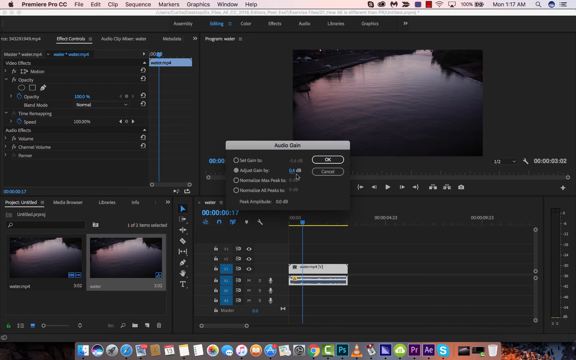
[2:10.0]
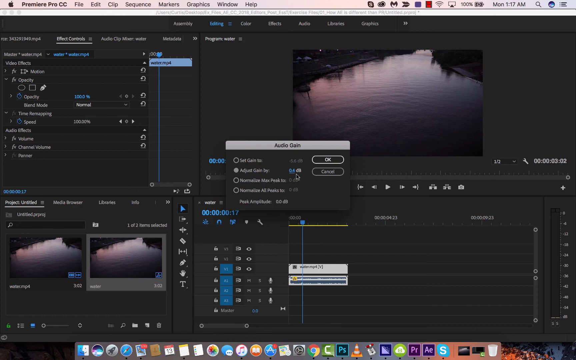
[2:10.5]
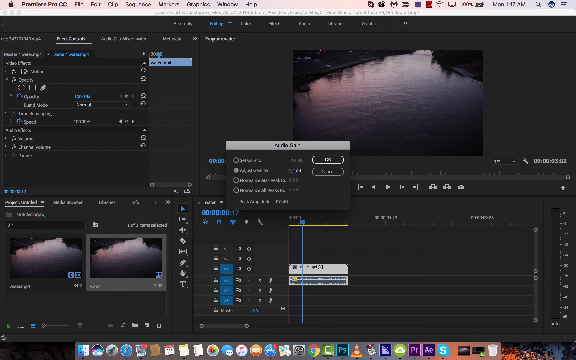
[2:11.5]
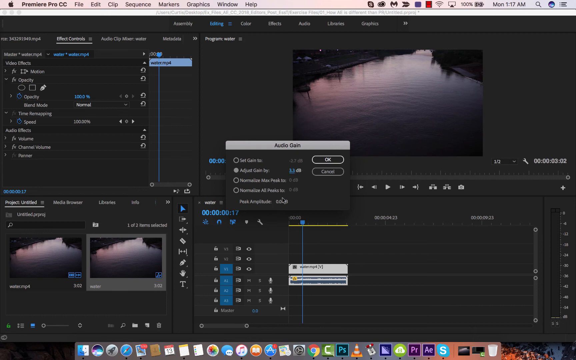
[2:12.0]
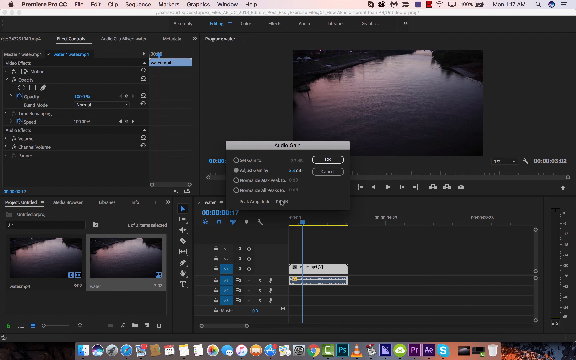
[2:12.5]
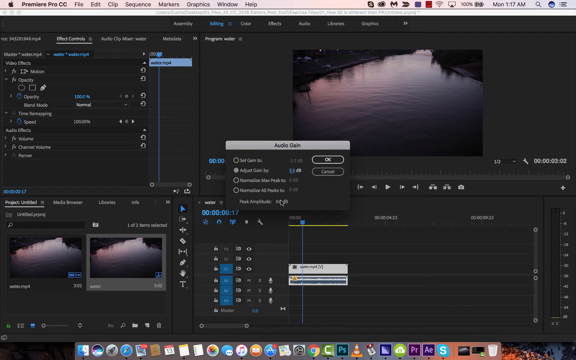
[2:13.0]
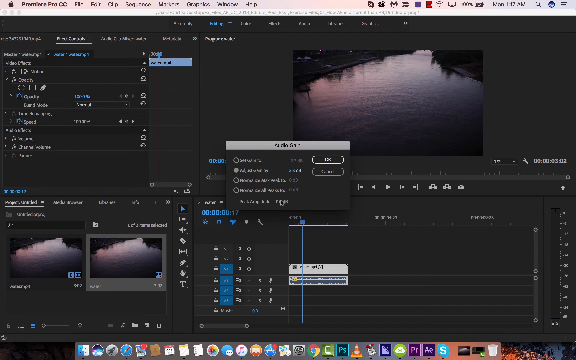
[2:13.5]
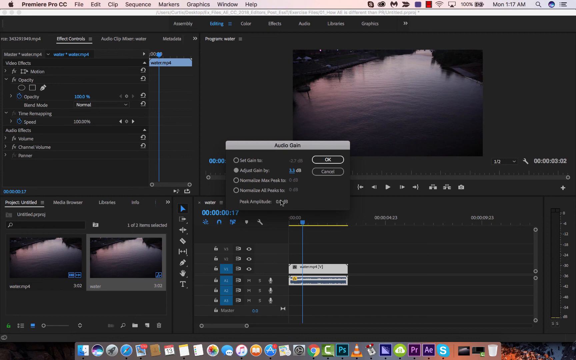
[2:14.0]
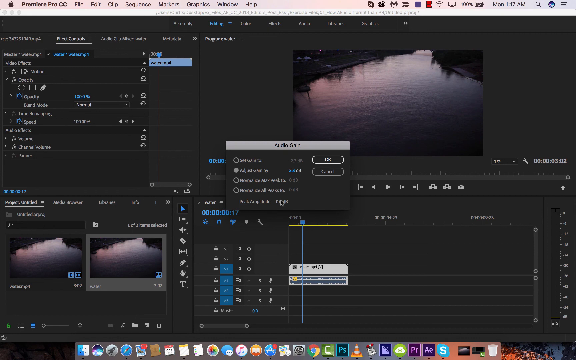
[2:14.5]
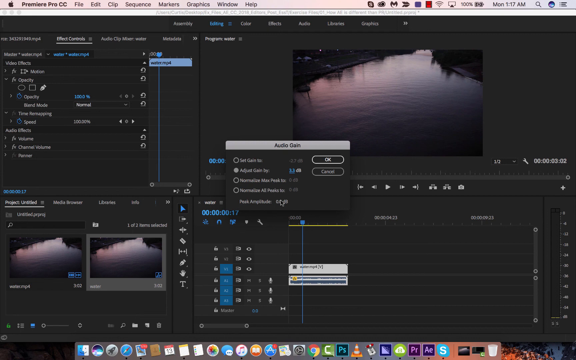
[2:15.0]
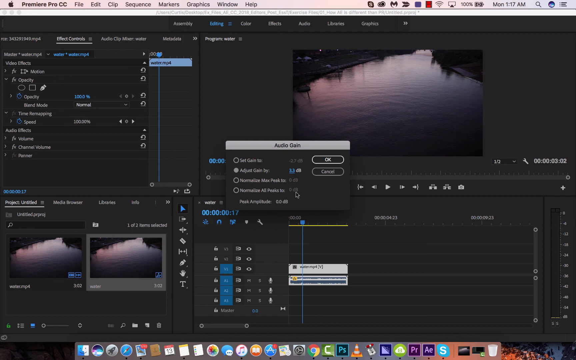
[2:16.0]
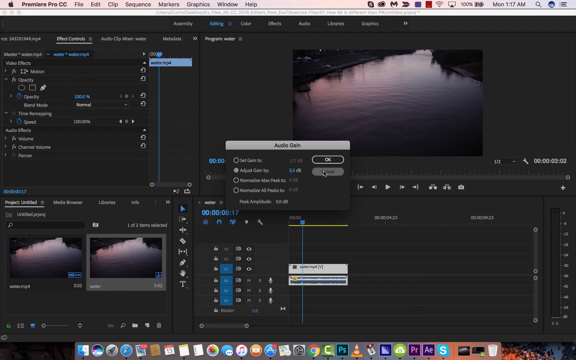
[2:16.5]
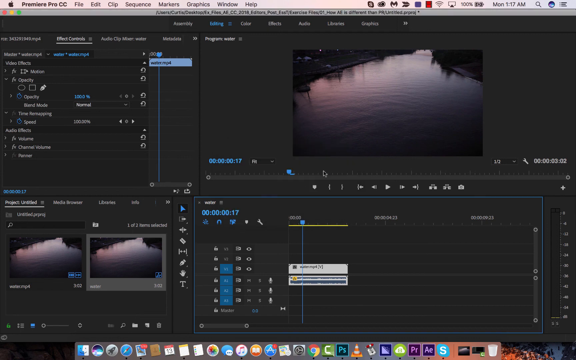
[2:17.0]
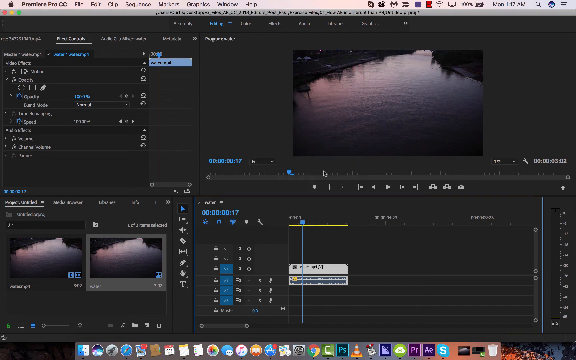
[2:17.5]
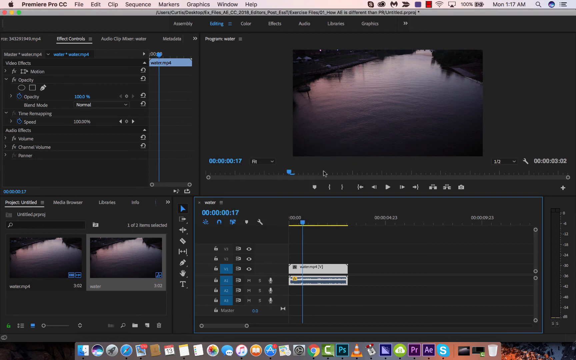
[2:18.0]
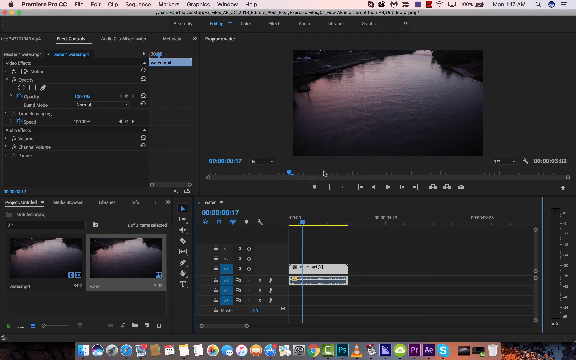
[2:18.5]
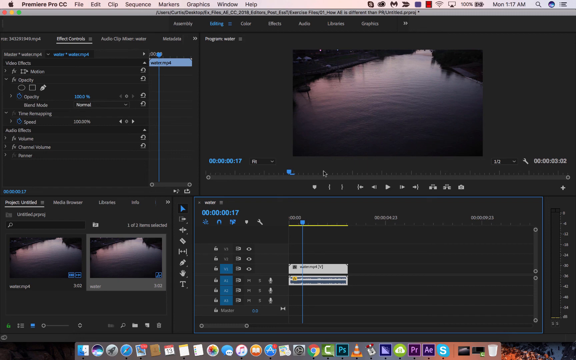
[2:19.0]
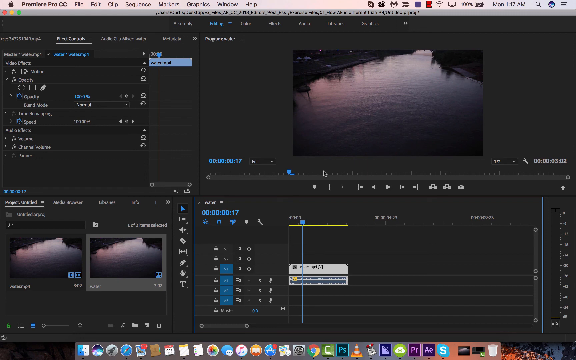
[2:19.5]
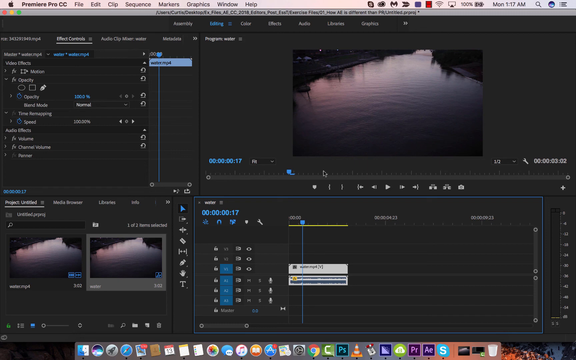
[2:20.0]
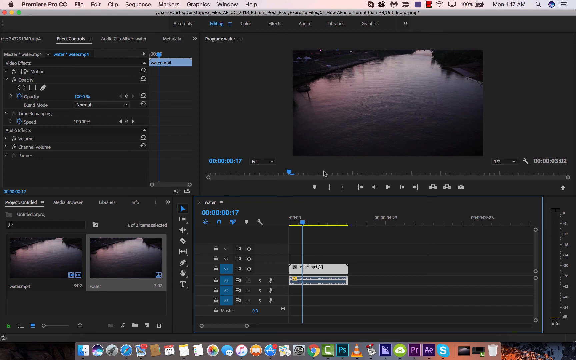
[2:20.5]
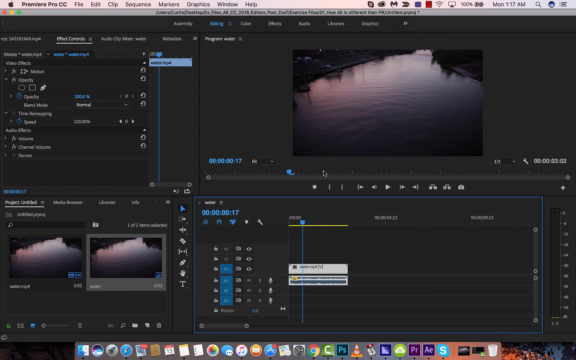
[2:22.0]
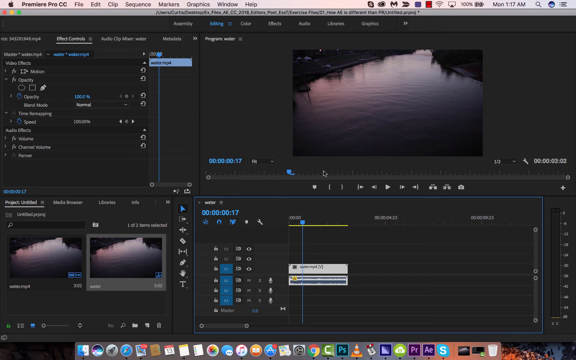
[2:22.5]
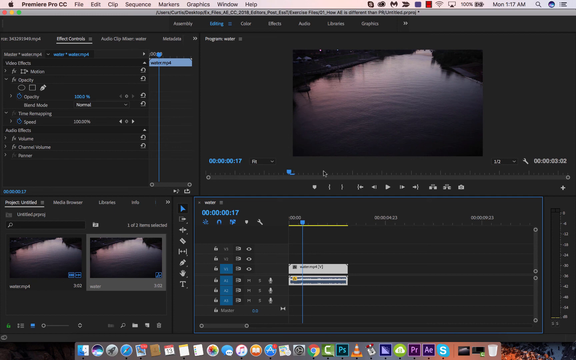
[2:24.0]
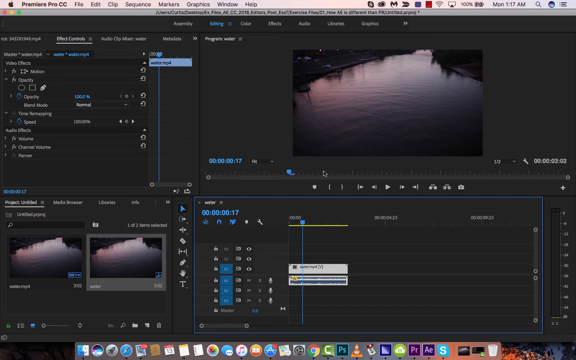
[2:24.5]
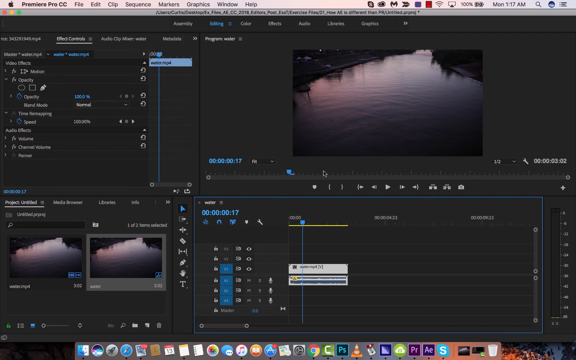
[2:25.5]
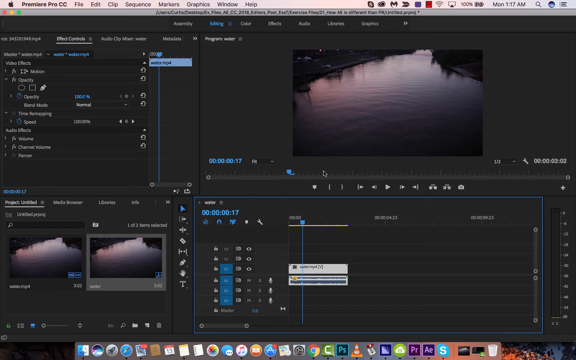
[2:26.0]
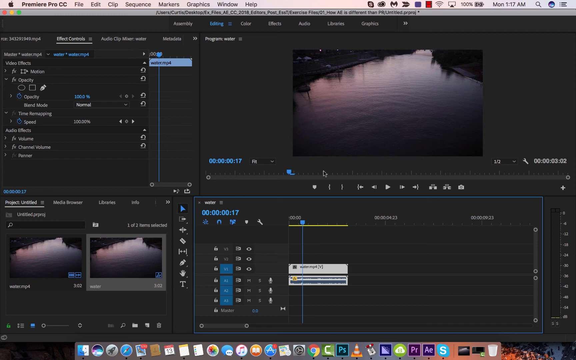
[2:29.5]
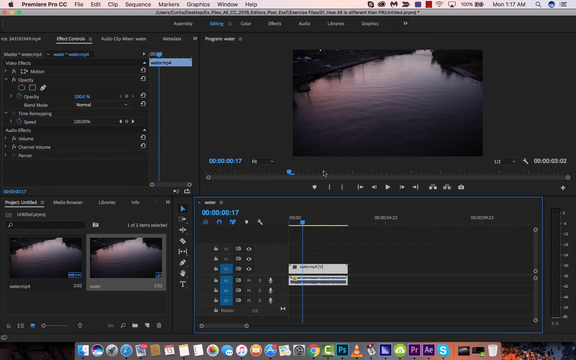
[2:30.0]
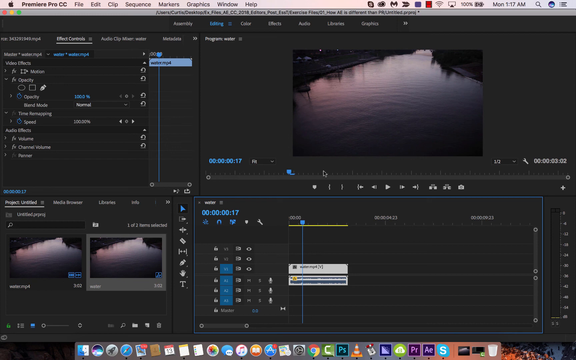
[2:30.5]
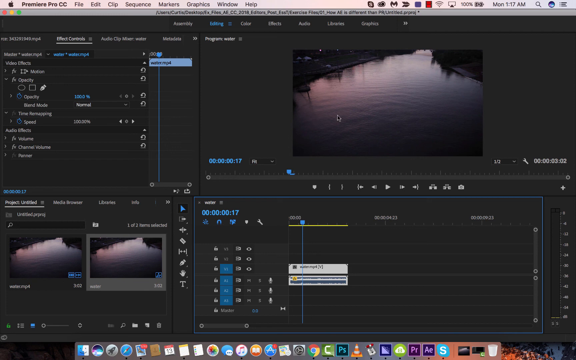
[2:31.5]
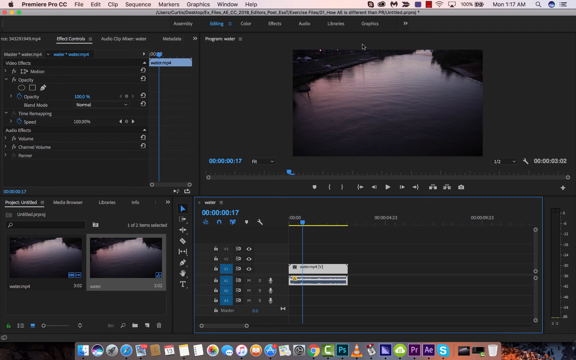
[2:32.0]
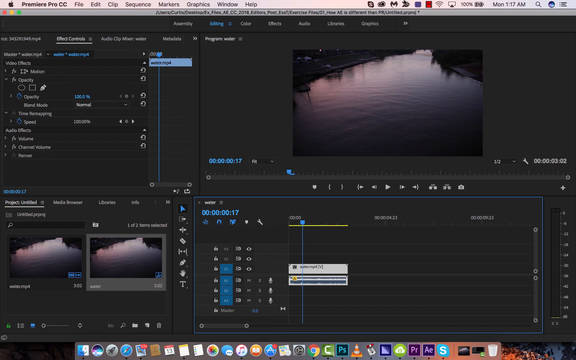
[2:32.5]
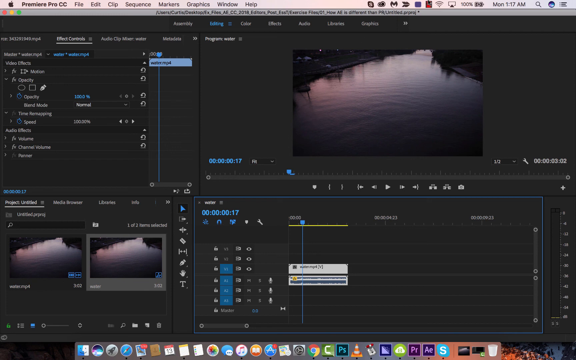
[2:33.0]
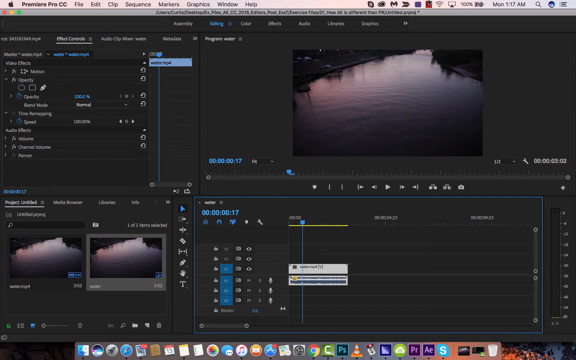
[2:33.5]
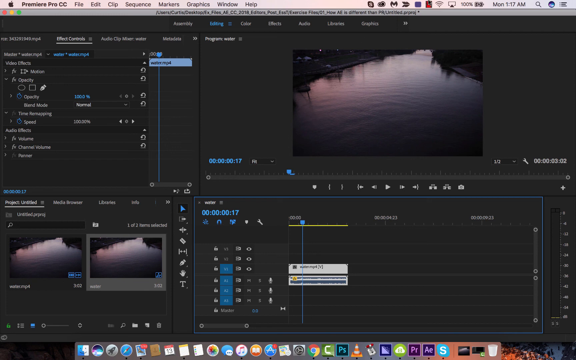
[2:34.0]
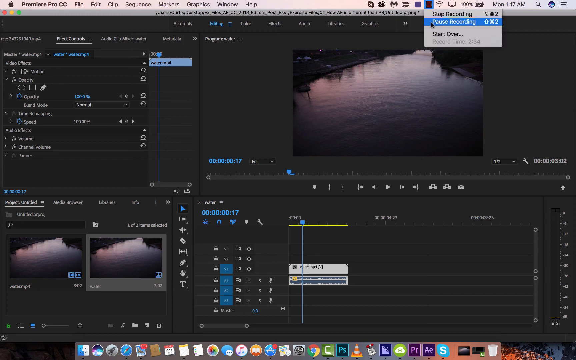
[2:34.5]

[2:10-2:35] The frame is a little wider than it is tall and shows a person's desktop on a Mac operating system, indicated by the Apple icon in the upper left. To its right the open application appears to be Premiere Pro CC, followed by the menus File, Edit, Clip, Sequence, Markers, Graphics, Window and Help. Further right are several icons for running programs, the battery level, and the day and time, Monday at 1:17 a.m. In the application area the upper left has some navigation options, and the center and upper right show a picture of a body of water going from a pinky purple in the upper left and gradually transitioning to gray diagonally down to the right. Two copies of it are in the lower-left area, likely for editing. A window labelled "Audio Gain" has popped up in the center, with the second option selected. Then Cancel is clicked, apparently not going with that option. The cursor ends up in the middle of the screen and does not move.